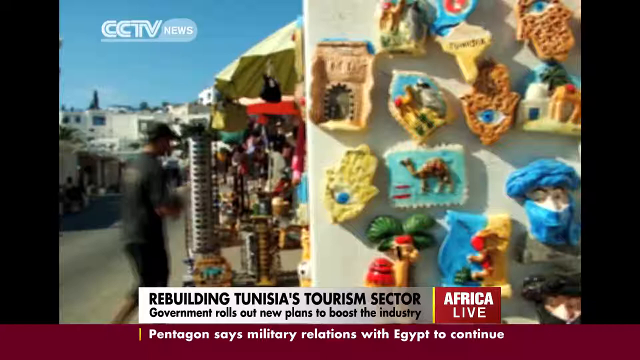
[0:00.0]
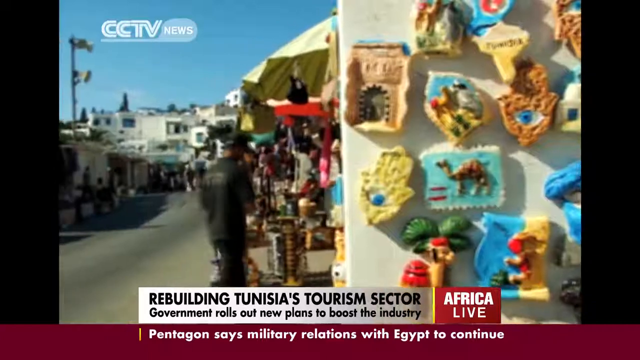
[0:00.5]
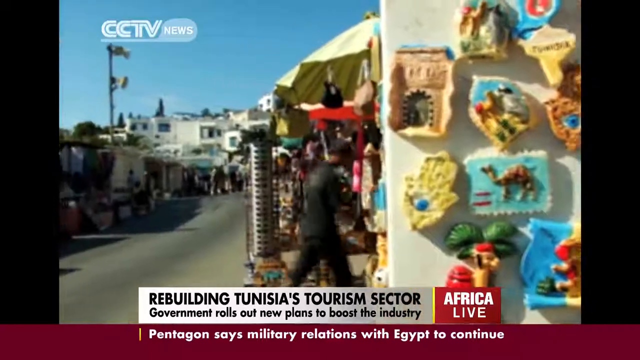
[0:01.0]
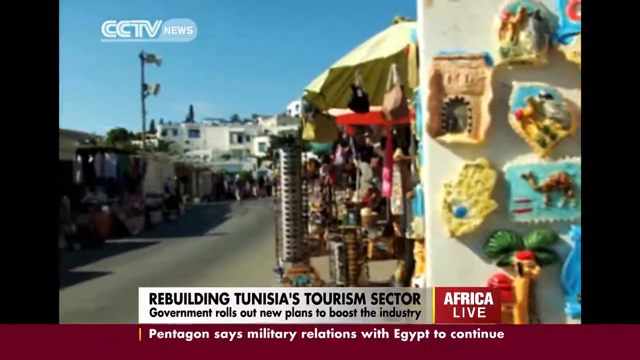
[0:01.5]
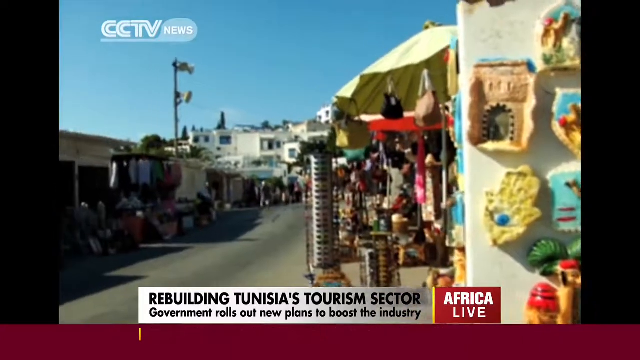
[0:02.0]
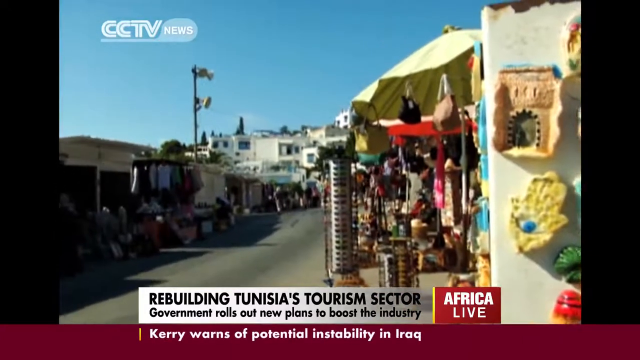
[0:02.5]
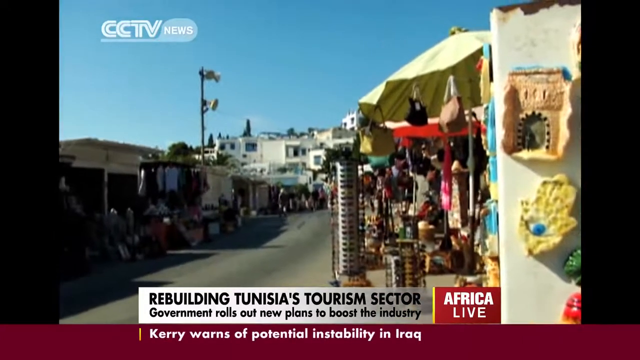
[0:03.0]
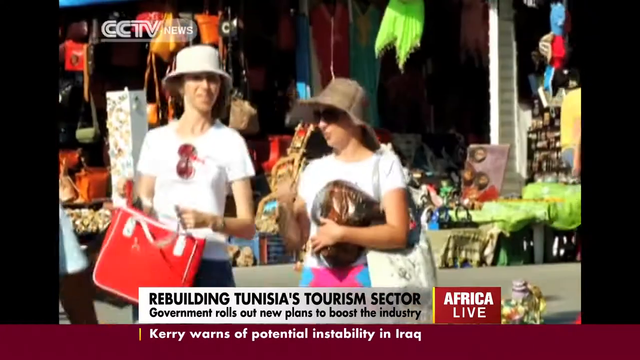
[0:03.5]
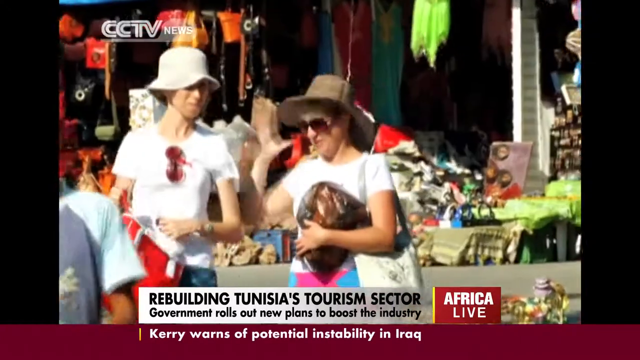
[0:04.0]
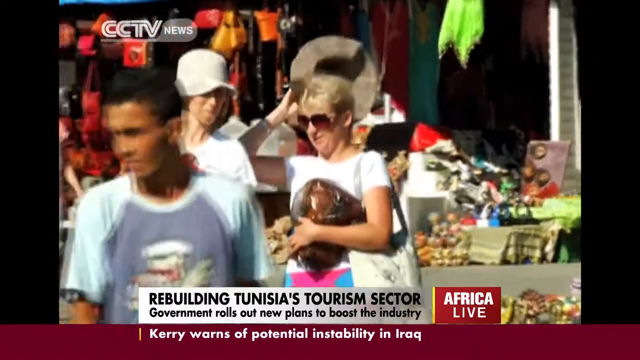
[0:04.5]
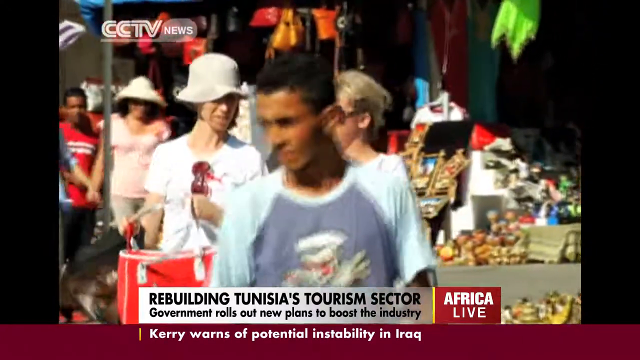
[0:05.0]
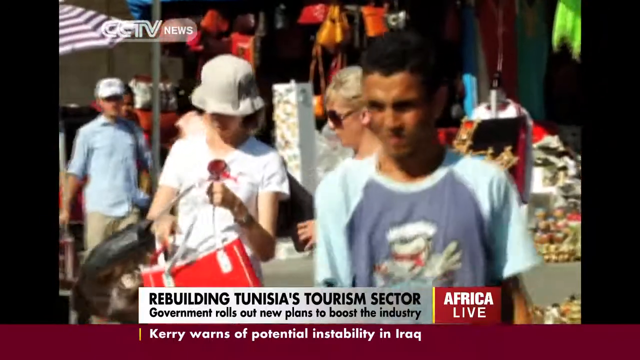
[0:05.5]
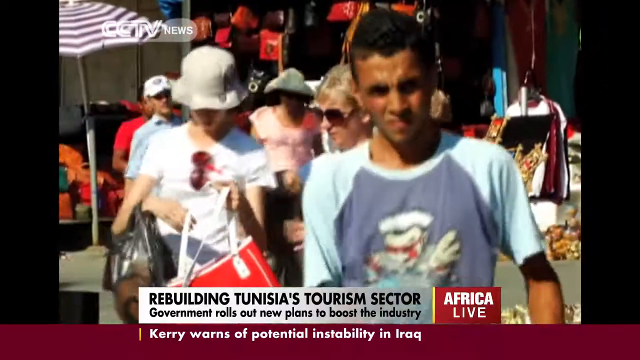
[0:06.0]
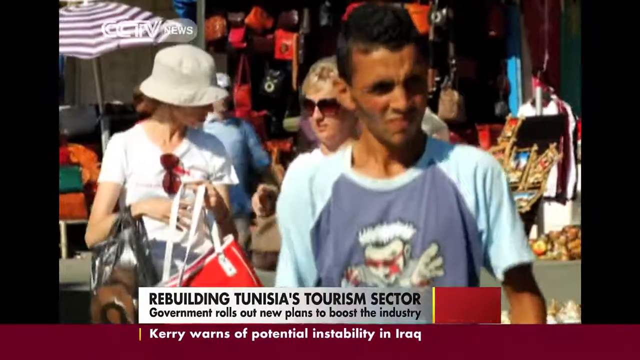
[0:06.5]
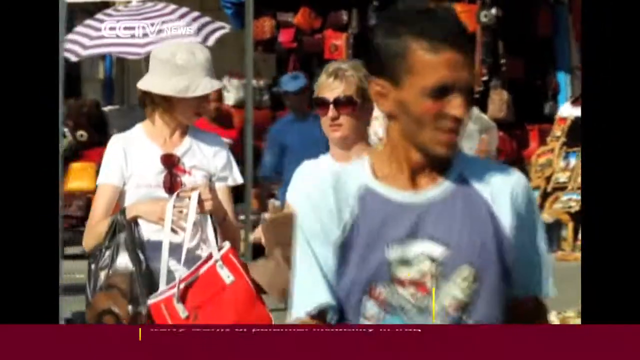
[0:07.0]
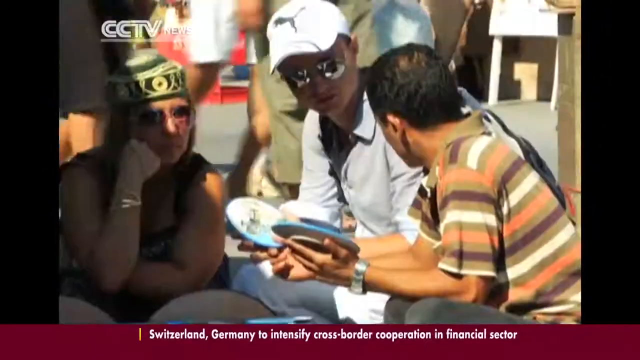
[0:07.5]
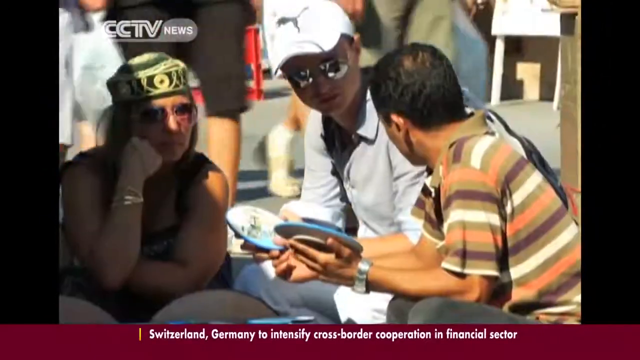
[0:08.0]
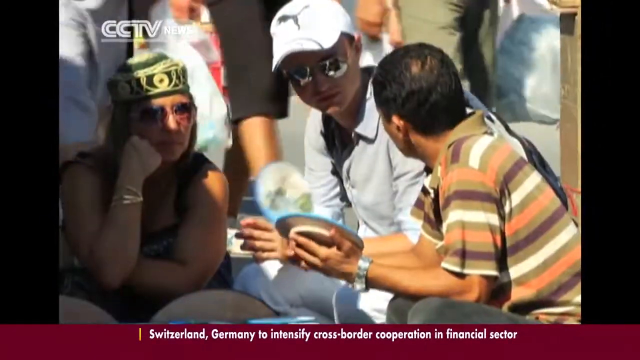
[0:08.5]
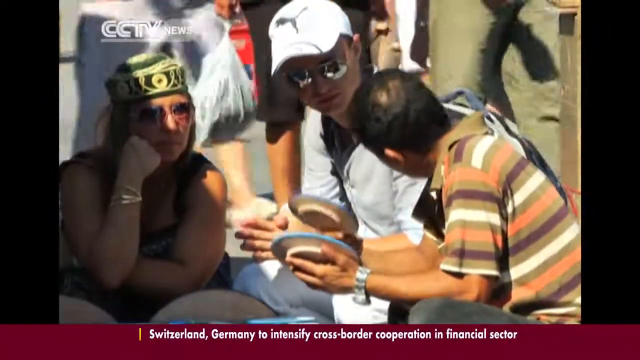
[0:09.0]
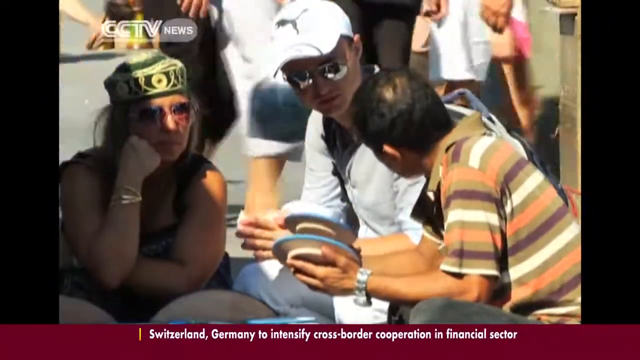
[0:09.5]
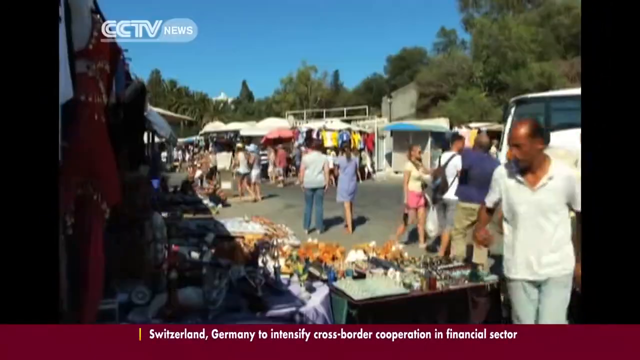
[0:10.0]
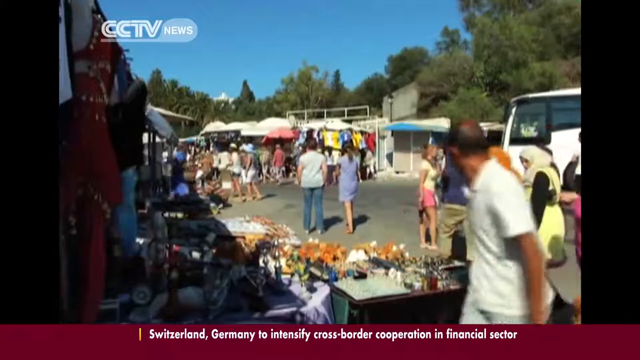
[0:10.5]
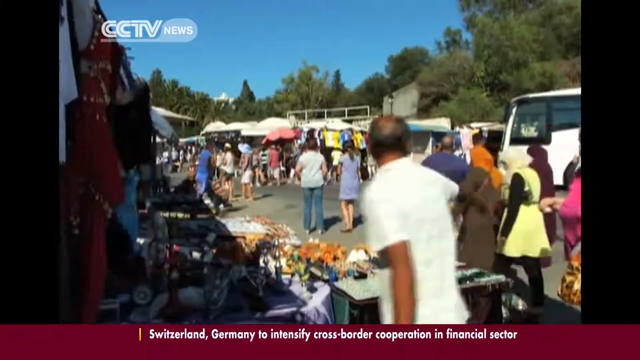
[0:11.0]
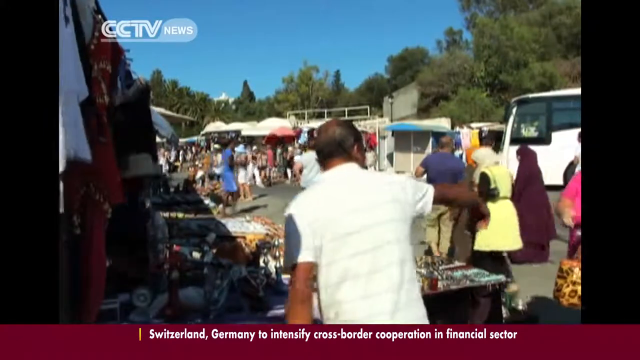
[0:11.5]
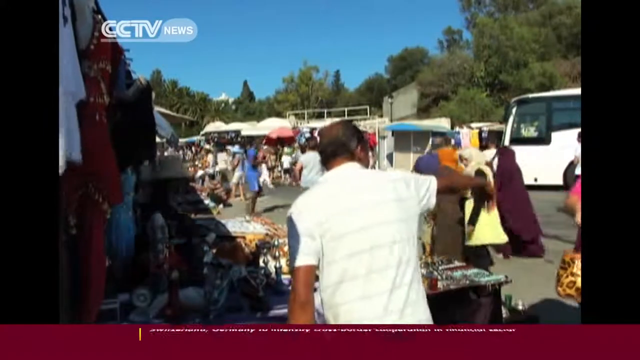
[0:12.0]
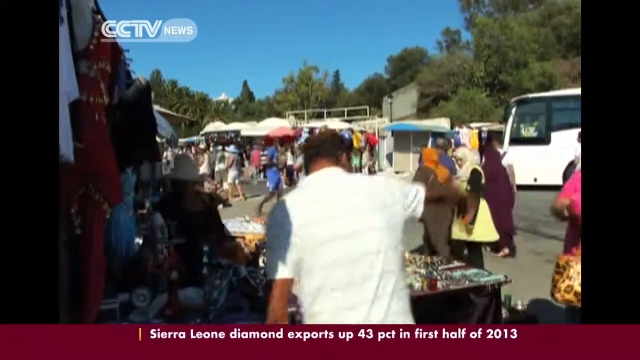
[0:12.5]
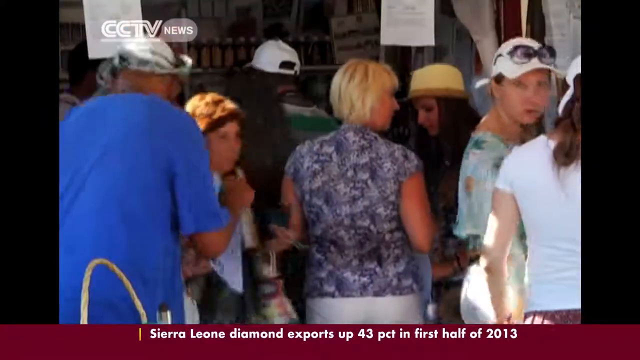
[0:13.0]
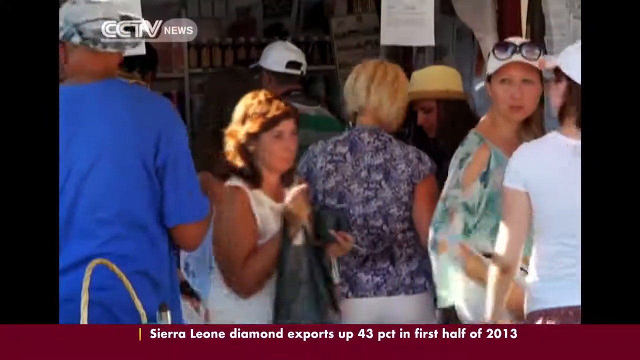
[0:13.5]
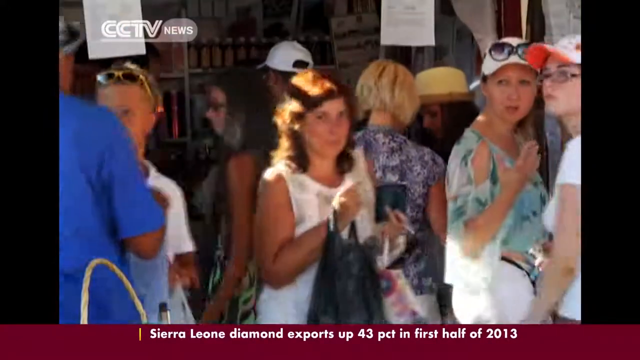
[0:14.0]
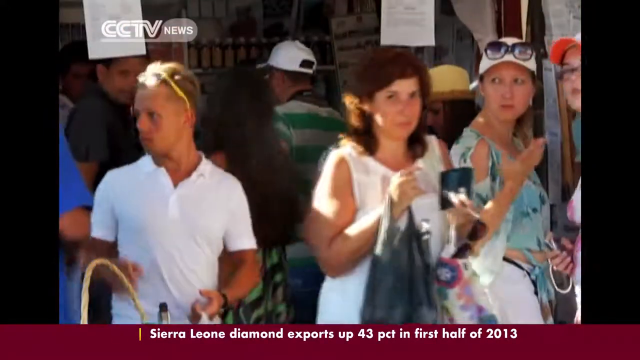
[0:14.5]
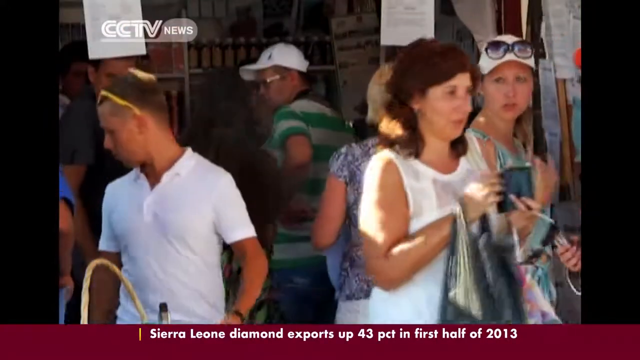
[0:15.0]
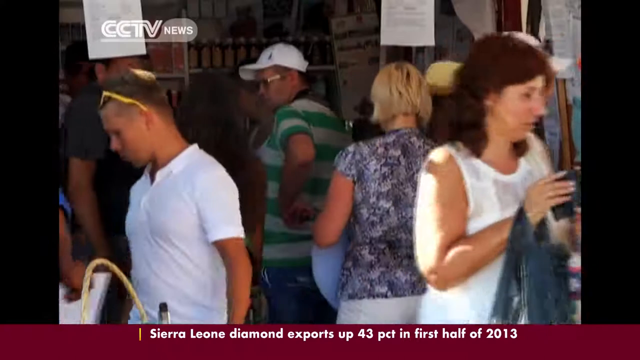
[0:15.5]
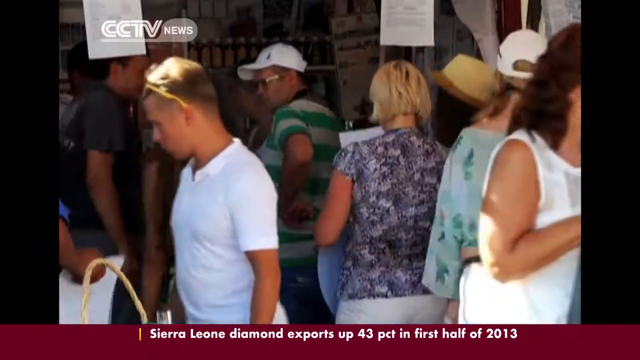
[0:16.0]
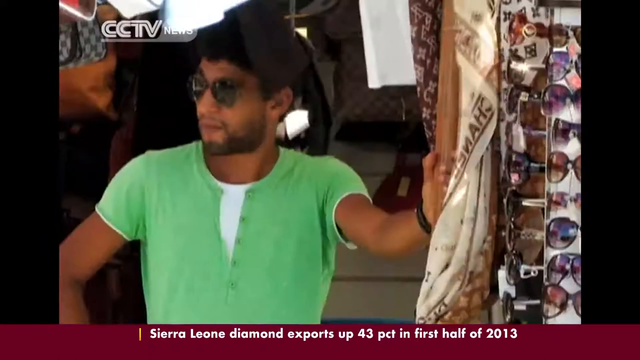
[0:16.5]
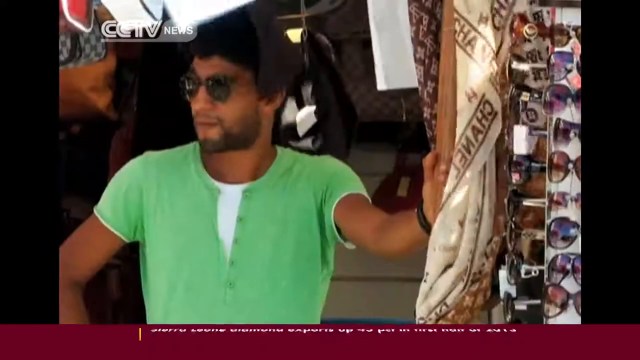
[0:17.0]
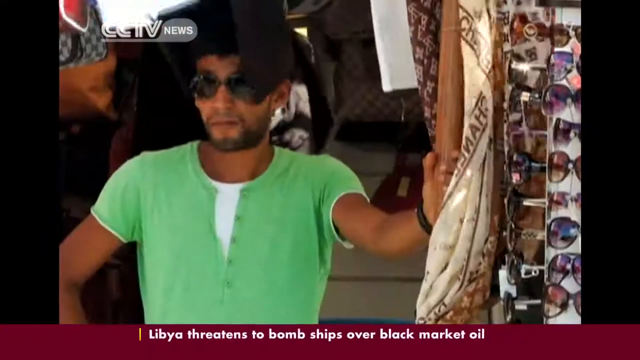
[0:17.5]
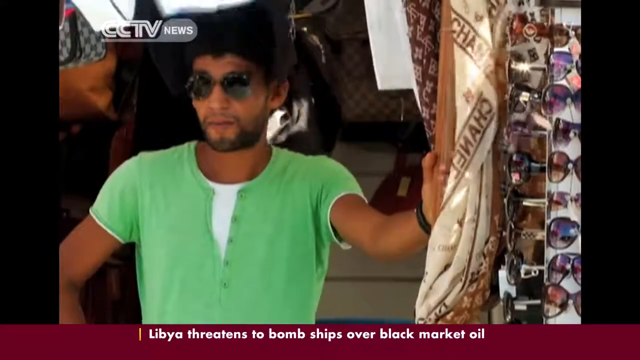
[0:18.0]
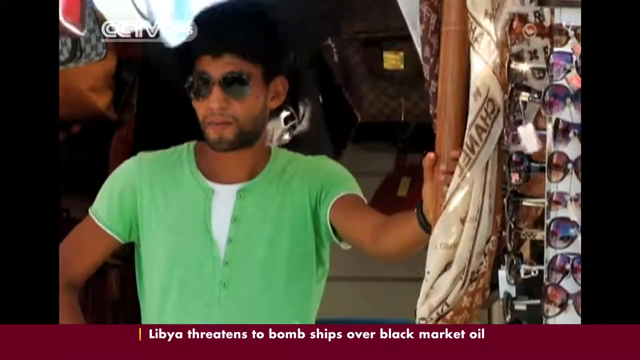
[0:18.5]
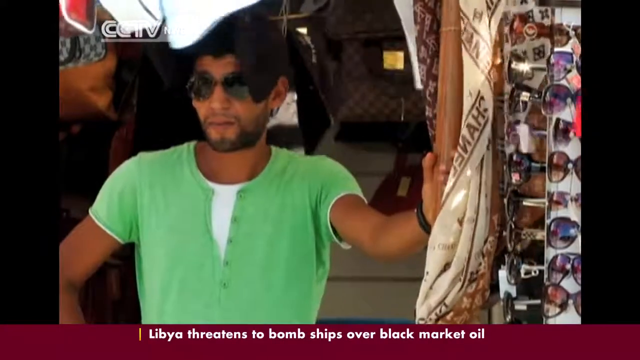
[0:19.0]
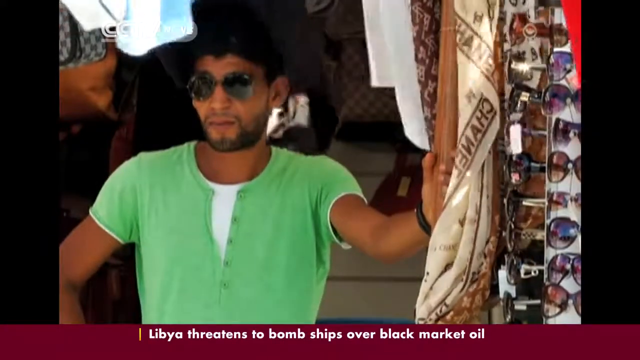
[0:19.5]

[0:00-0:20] This CCTV news report is about rebuilding Tunisia's tourism sector, with the government rolling out new plans to boost the industry. A dark maroon Africa Live lower third runs along the bottom of the screen with rolling information, as on a news channel. The main footage shows what appears to be an open-air marketplace in Tunisia on a very sunny day, with tourists walking around wearing sunglasses and hats, presumably buying items, while vendors stand selling different souvenirs. No presenter appears on screen; the footage is what looks like static B-roll shots. Across many different cuts of the busy market, at least 30 or 40 different people are seen walking around.